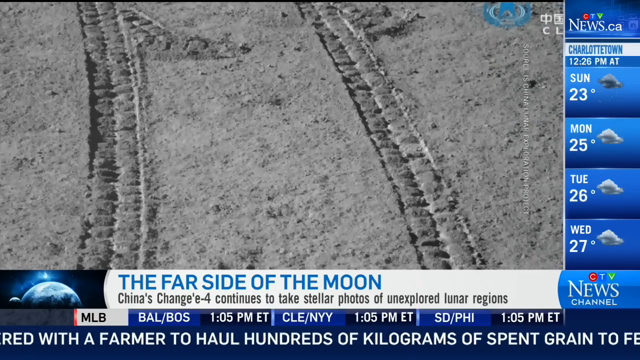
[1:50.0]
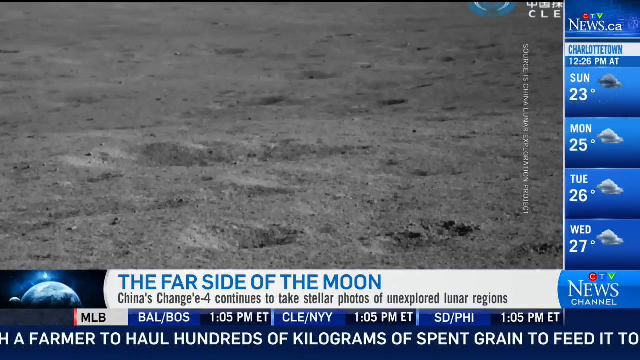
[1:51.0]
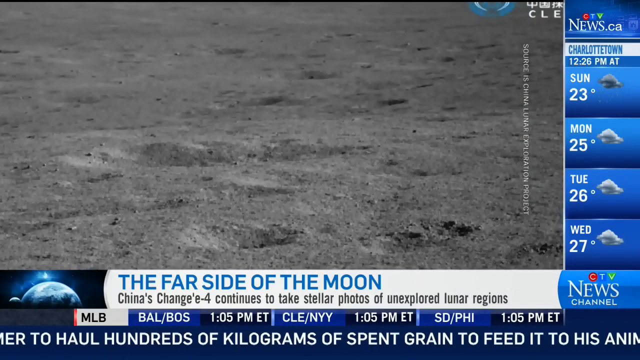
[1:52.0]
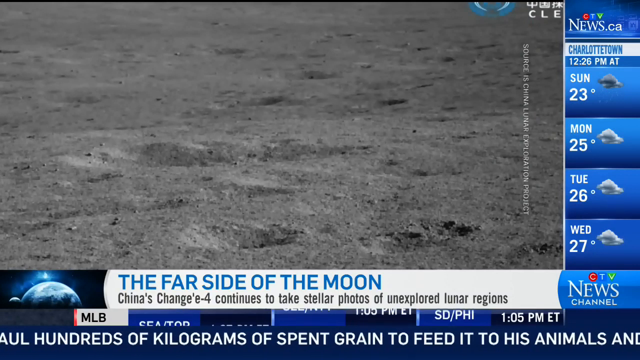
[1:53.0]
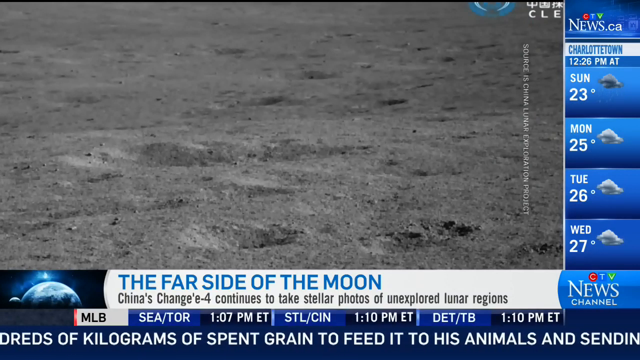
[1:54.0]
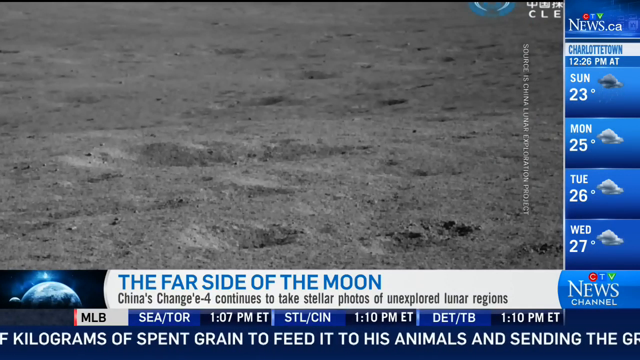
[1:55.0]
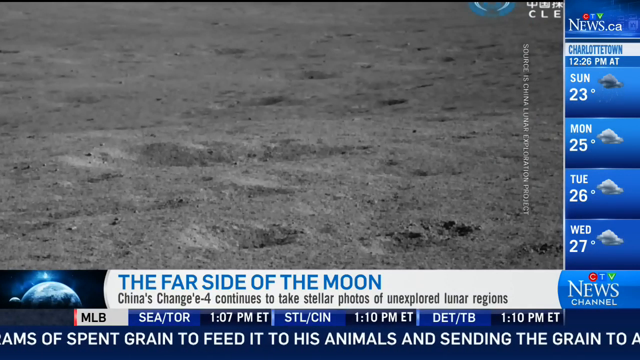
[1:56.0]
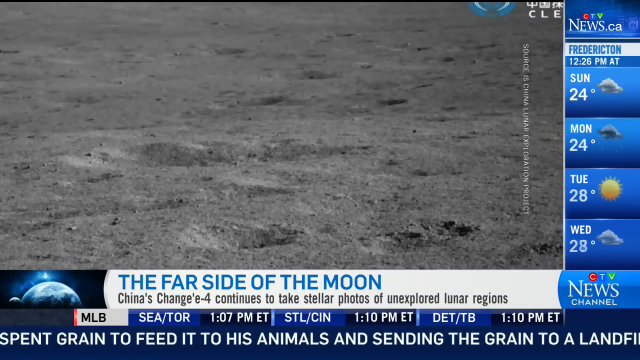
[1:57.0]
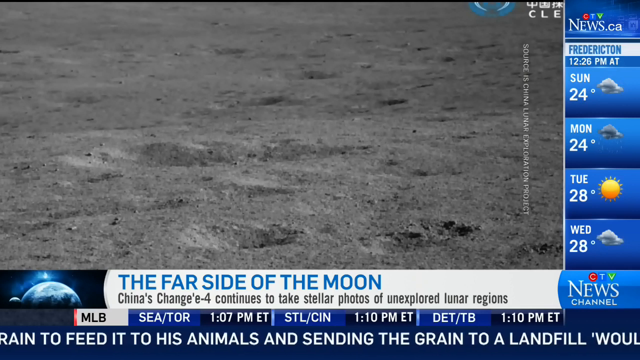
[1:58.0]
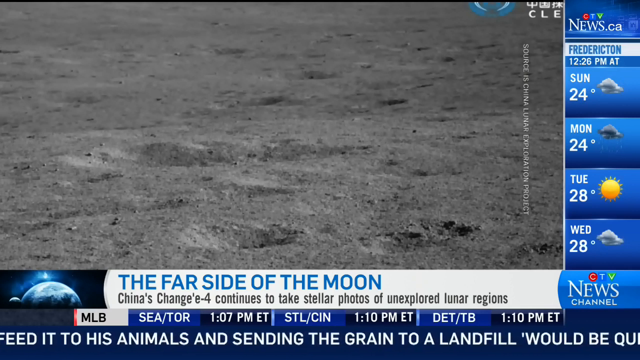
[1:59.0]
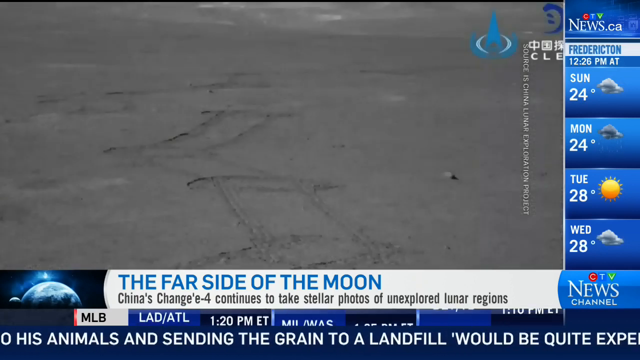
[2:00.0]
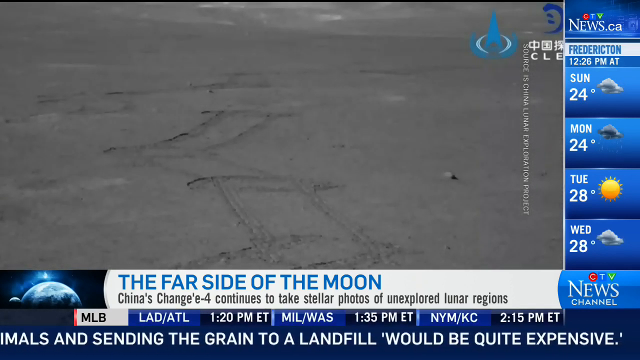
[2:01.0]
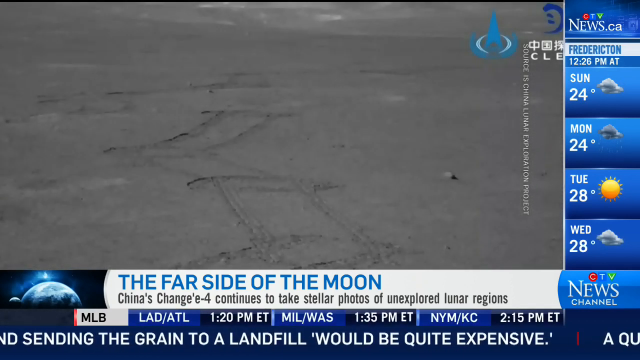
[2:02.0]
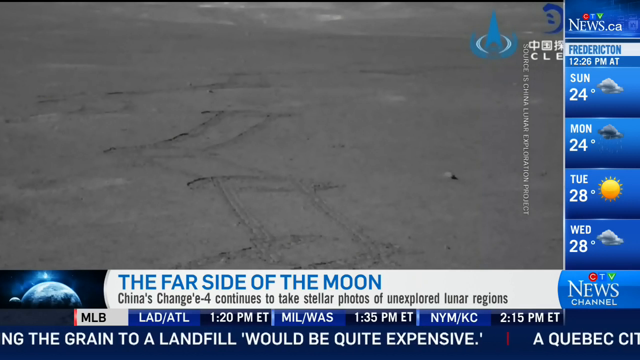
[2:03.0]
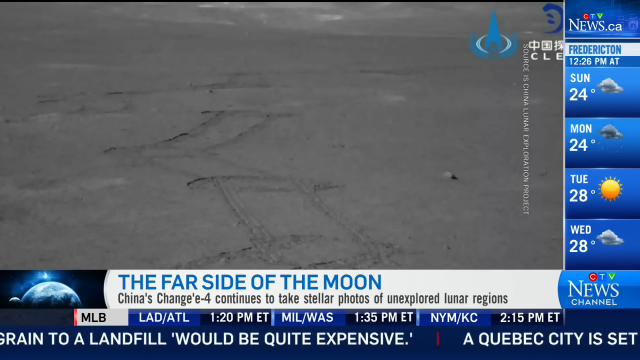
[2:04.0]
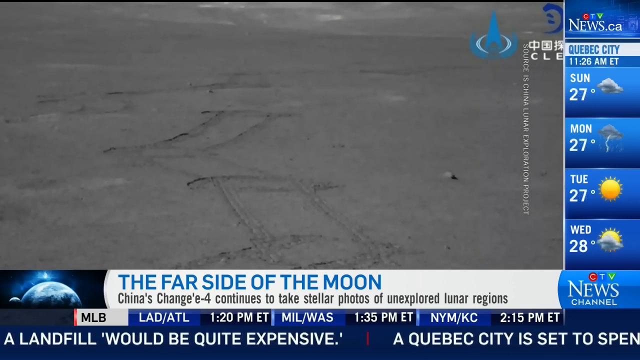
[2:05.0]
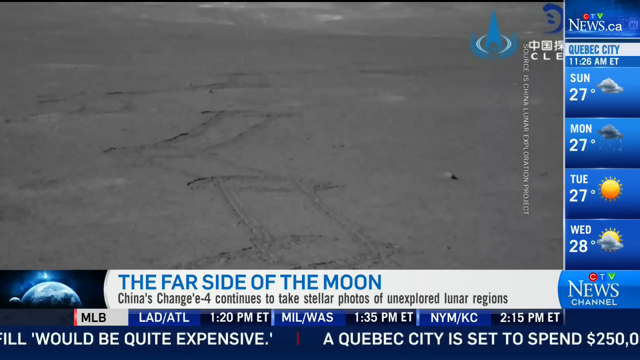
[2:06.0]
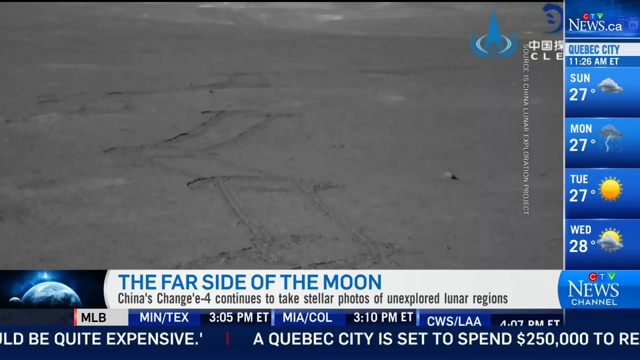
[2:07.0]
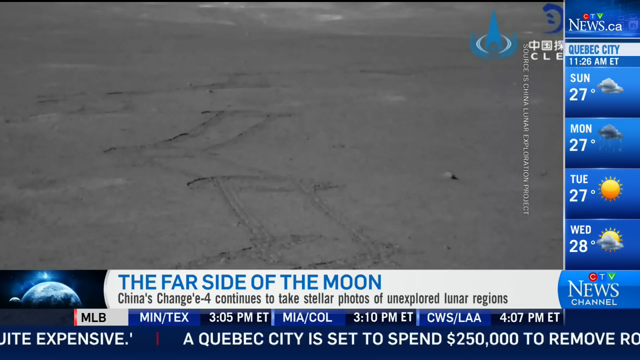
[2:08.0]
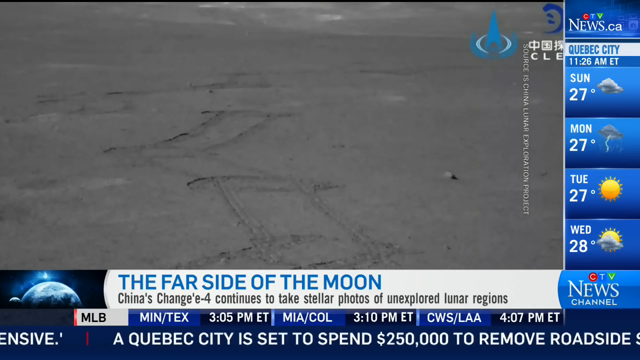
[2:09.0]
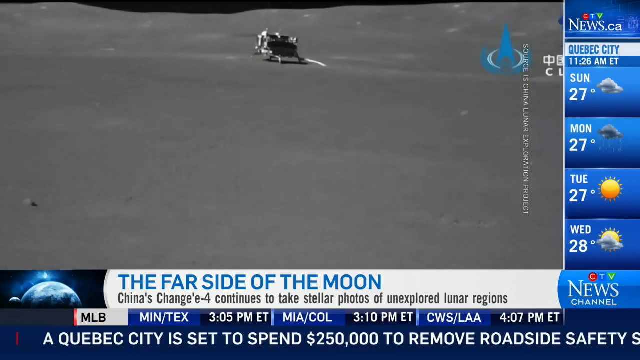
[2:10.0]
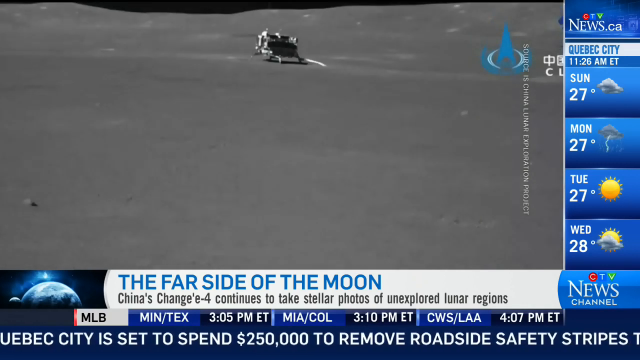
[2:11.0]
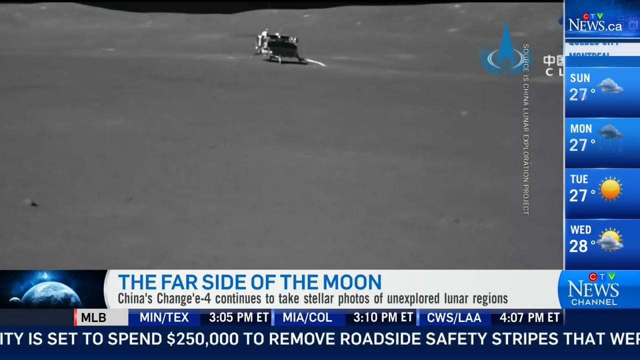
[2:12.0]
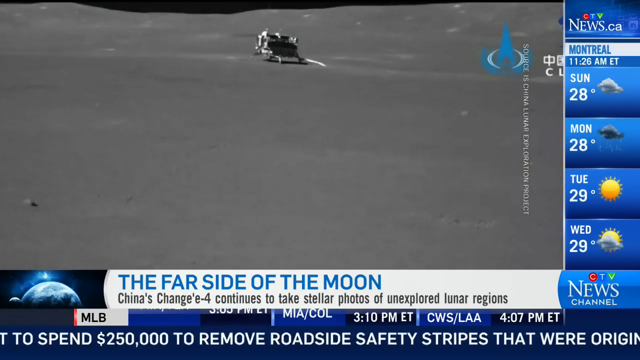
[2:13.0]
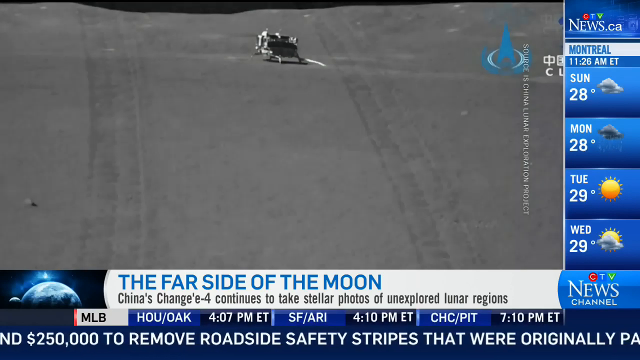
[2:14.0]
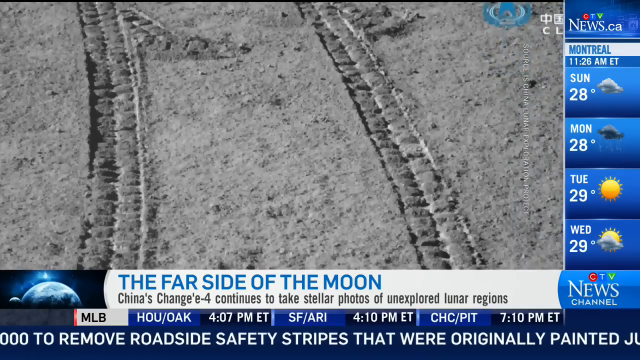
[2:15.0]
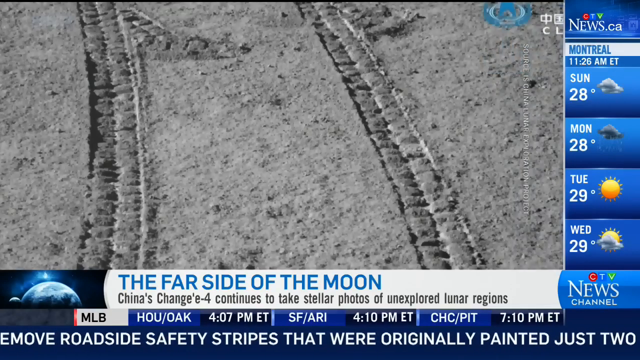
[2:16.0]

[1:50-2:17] More photos from the Chang'e 4 rover are shown: first the dust of the Moon, a dusty, desert-like terrain, all in grayish colors. The rover's tracks are visible, showing where it came from or where it is going. Then a photo shows what seems to be another rover on the Moon. Throughout, the banner at the bottom reads "the far side of the Moon, China's Chang'e continues to take stellar photos of unexplored regions."